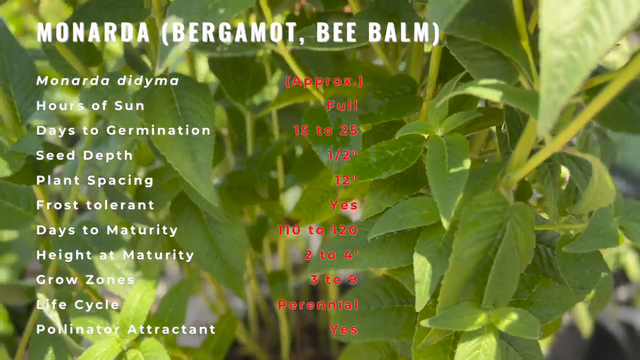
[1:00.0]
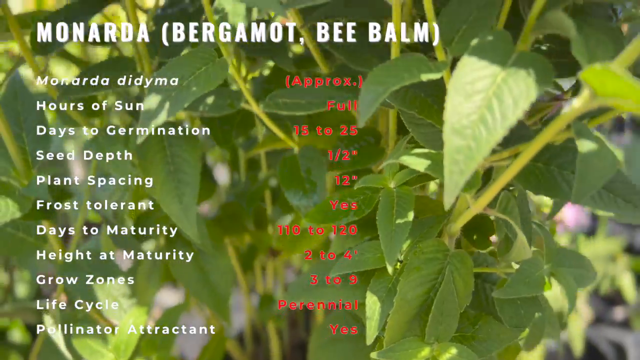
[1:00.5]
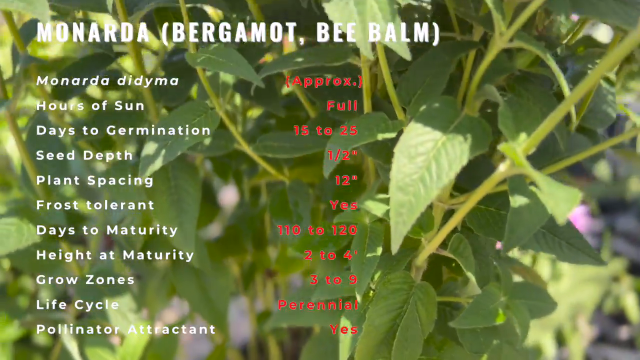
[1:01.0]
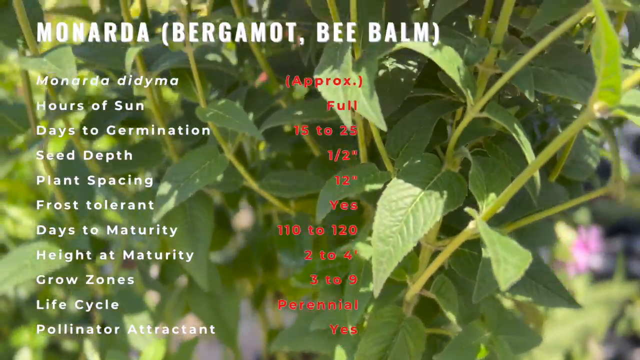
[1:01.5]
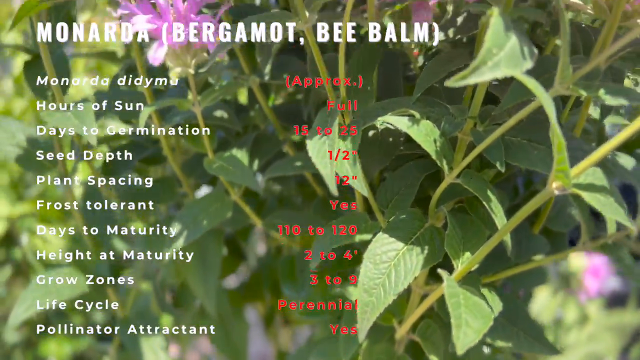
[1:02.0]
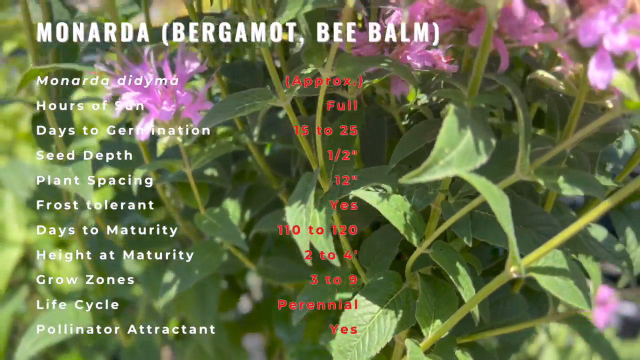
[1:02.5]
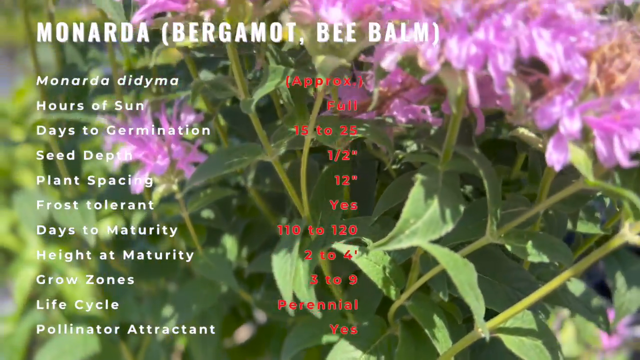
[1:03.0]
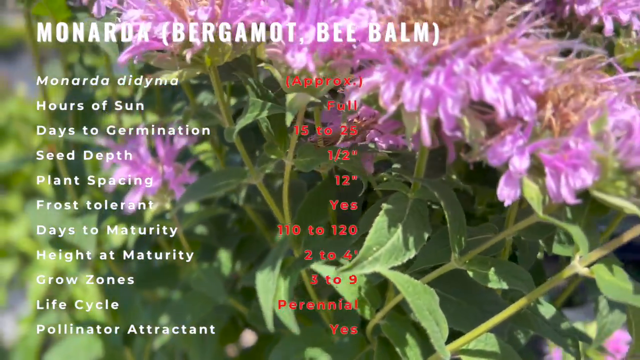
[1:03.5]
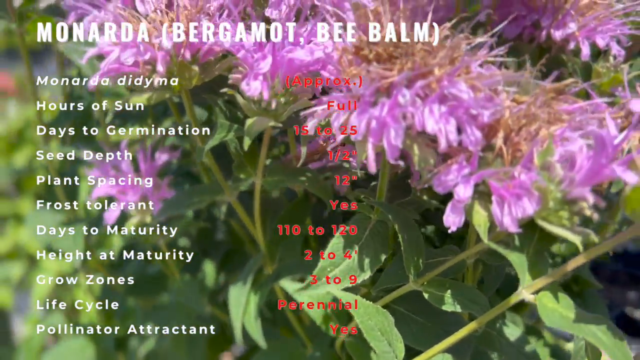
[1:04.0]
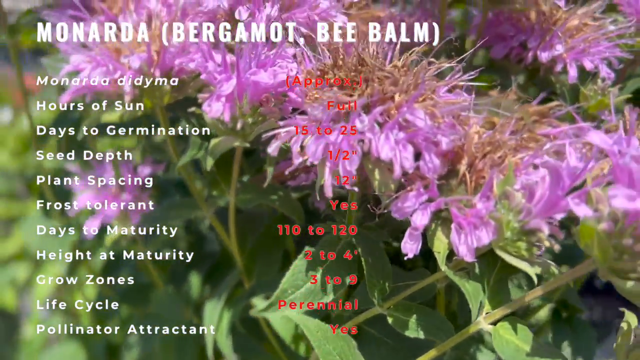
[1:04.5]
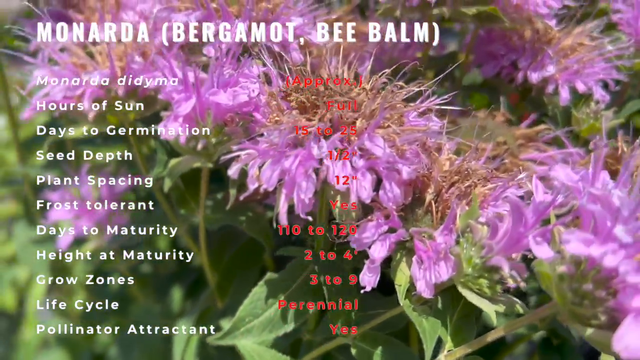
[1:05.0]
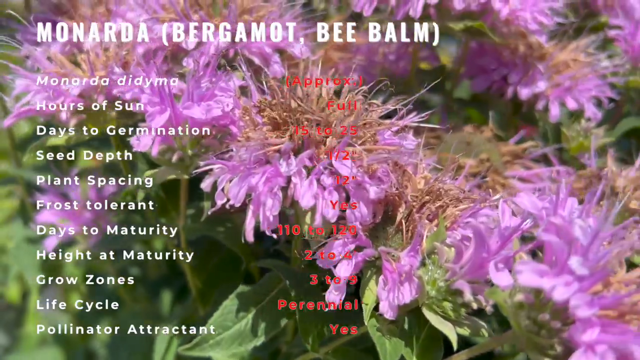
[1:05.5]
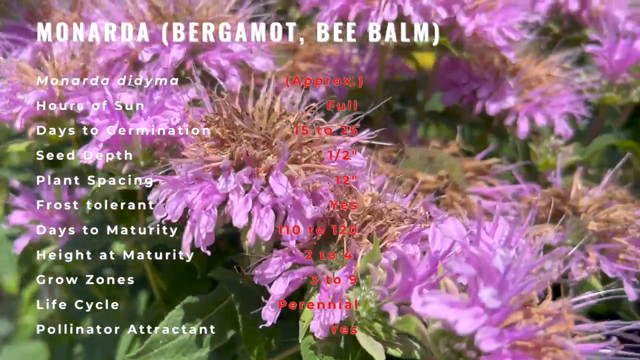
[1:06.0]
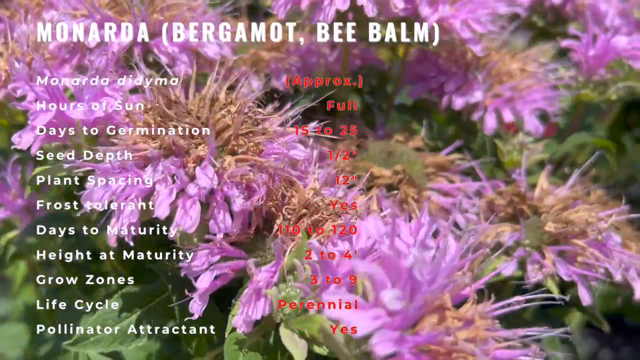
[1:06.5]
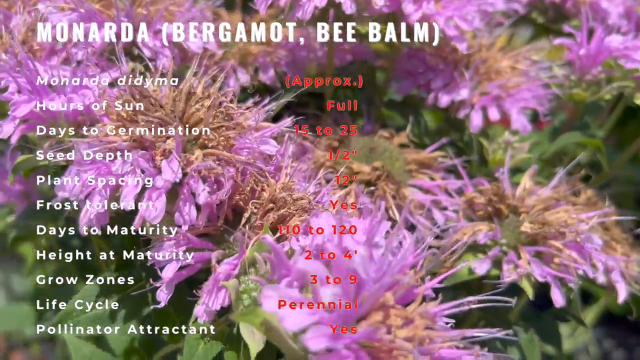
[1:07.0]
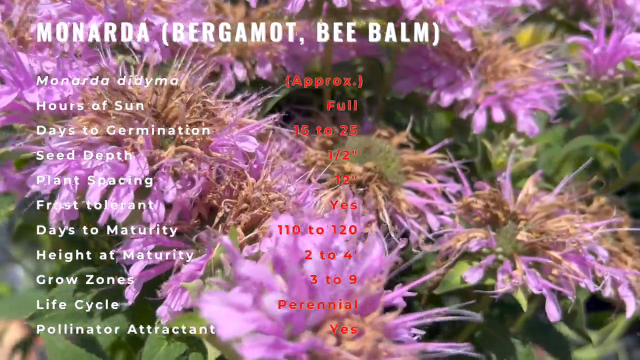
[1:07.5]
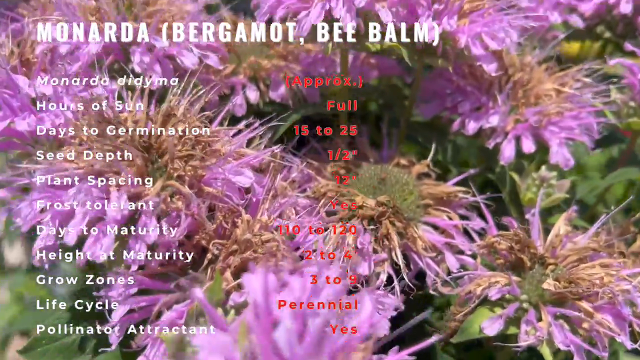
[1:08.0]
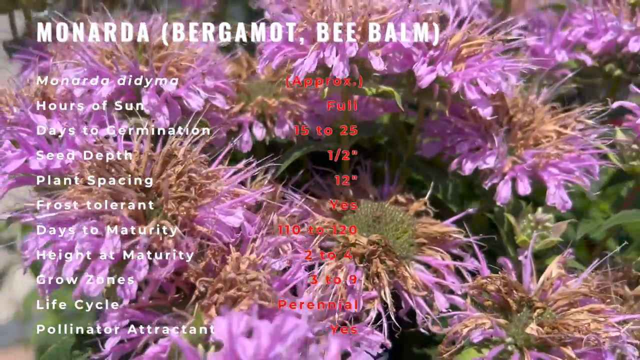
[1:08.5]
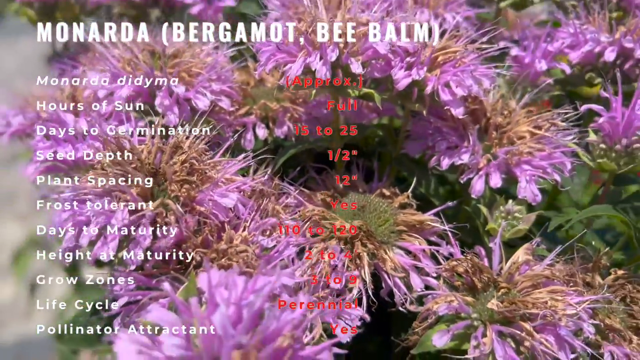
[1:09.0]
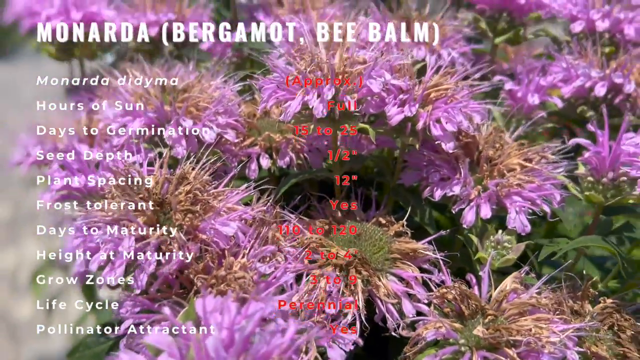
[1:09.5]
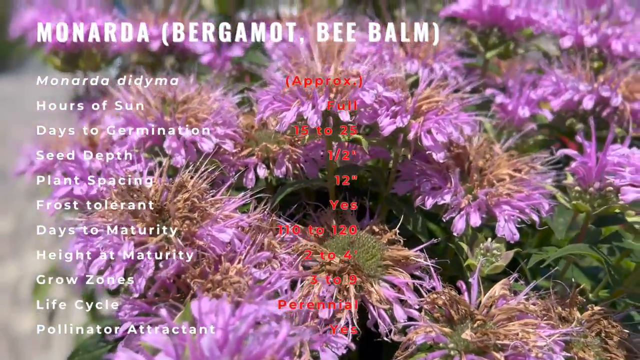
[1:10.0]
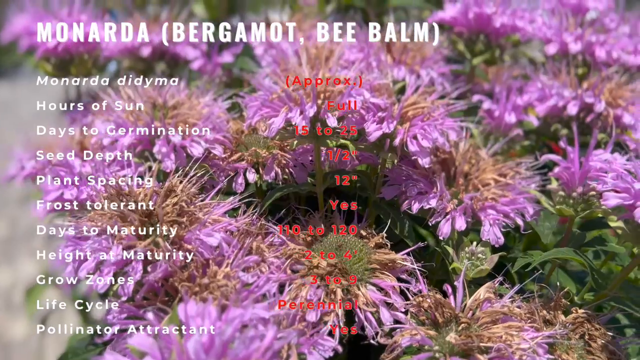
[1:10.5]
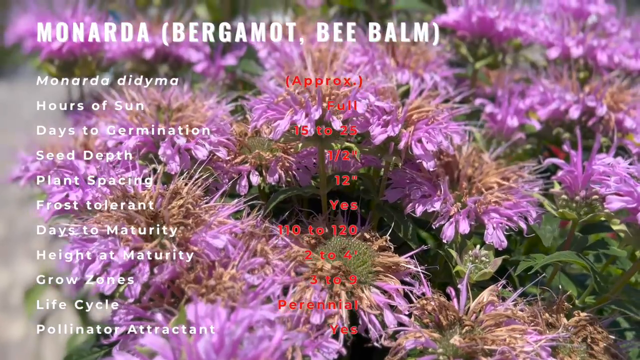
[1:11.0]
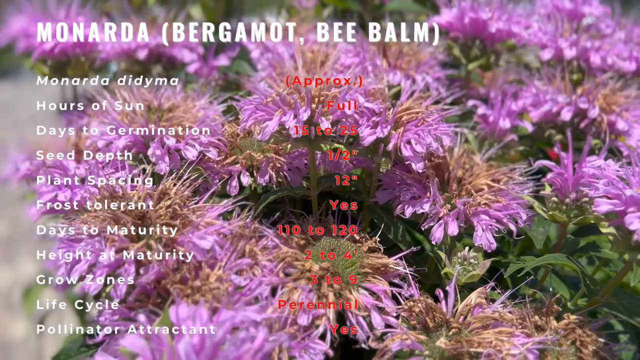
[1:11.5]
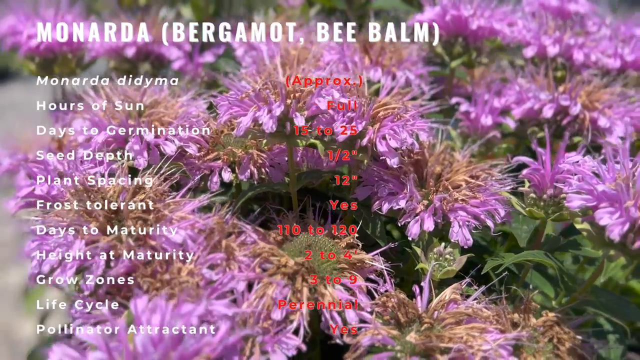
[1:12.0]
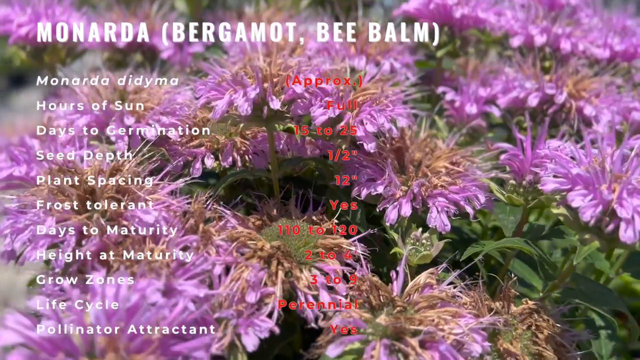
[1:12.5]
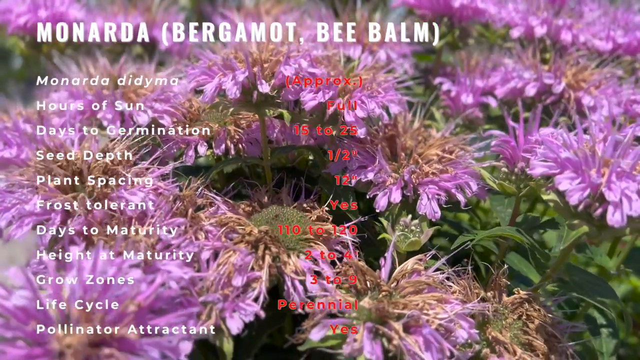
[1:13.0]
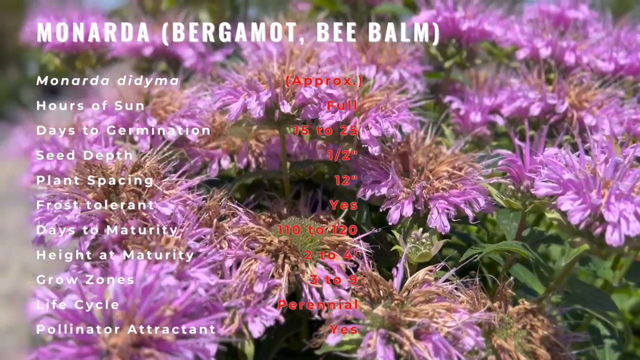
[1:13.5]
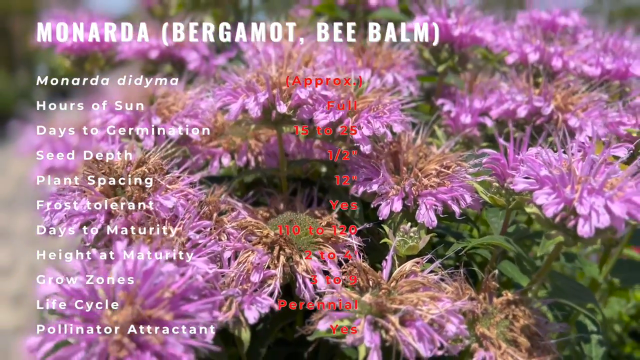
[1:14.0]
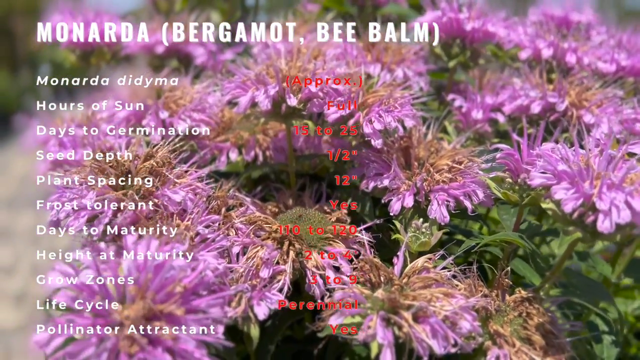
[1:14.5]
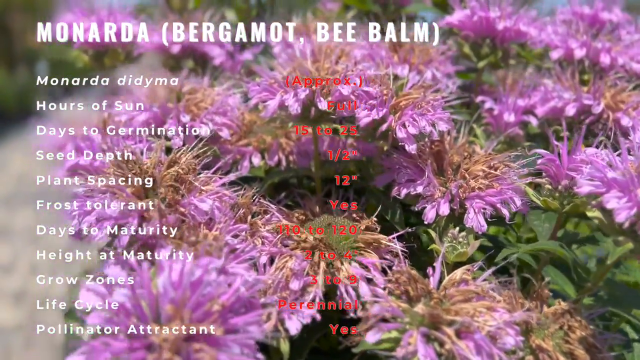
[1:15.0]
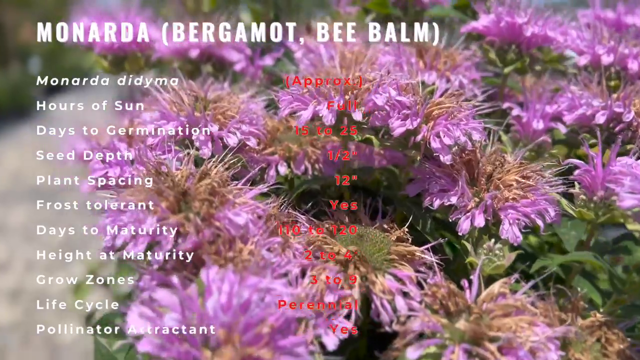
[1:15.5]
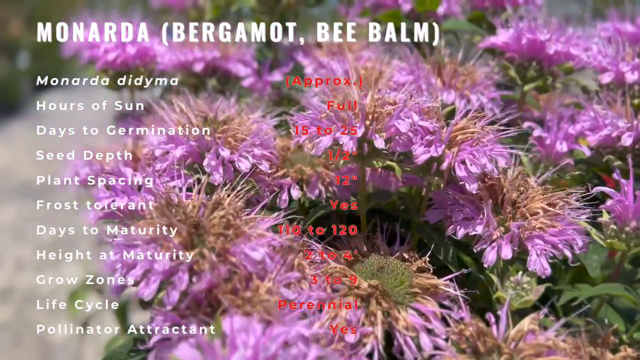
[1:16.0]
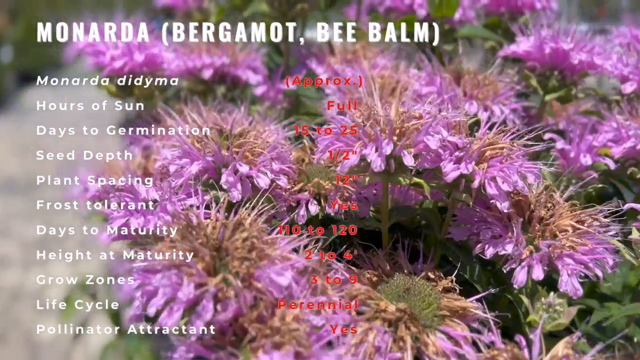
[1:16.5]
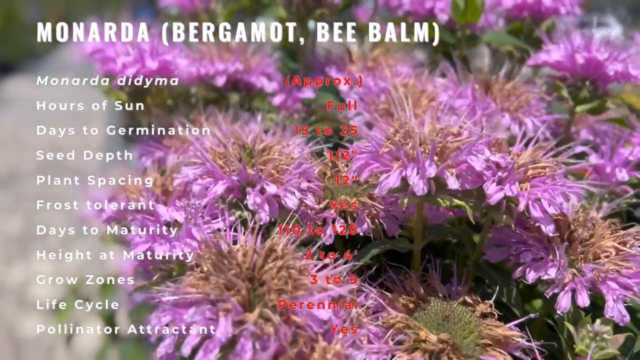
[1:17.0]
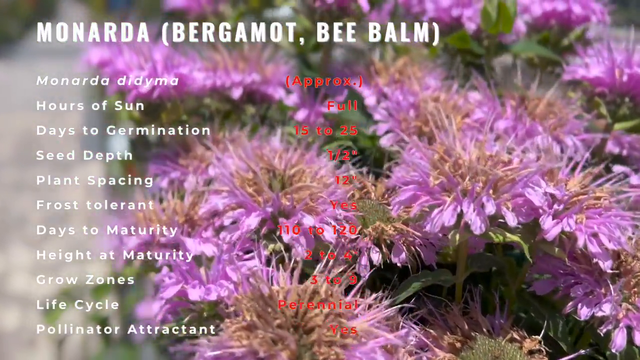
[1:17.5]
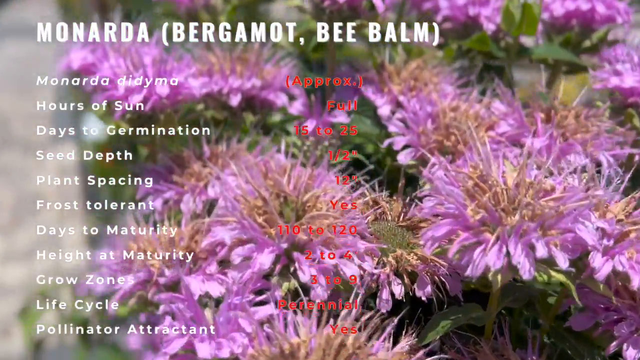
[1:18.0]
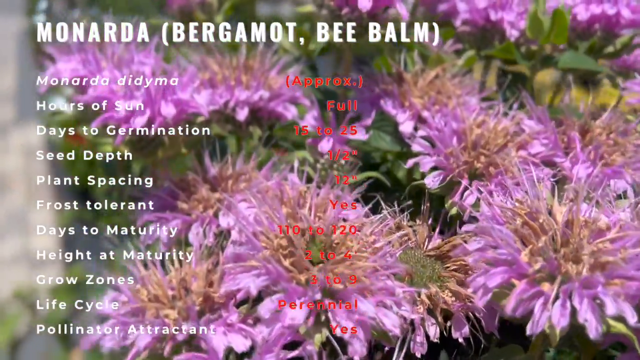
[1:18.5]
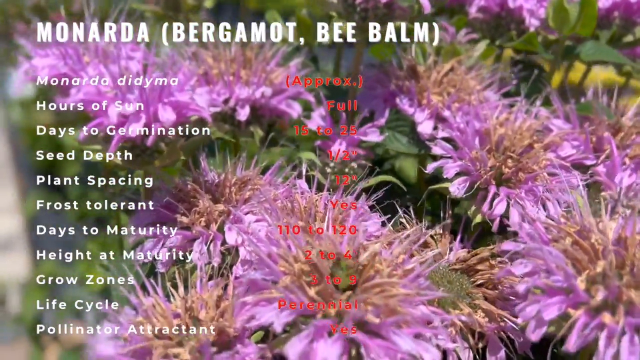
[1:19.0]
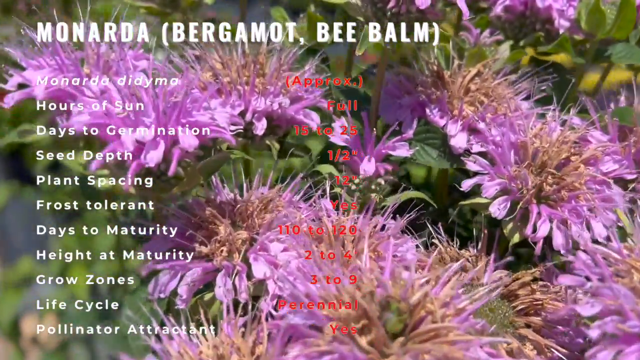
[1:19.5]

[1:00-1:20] A plant has a lot of green leaves and a lot of vines. As the camera scrolls up, a cluster of violet flowers comes into view. Some of the flowers have brown in the middle and seem to be aging; each flower has a lot of small violet petals, and there is a whole cluster of them on the plant. In the forefront of the screen is the plant's name, "Monarda", with a list of its characteristics underneath, including days to germination, hours of sun, plant spacing, frost tolerant and days to maturity. The camera keeps moving at different angles, showing the whole plant, which has really tall vines sticking out from above.